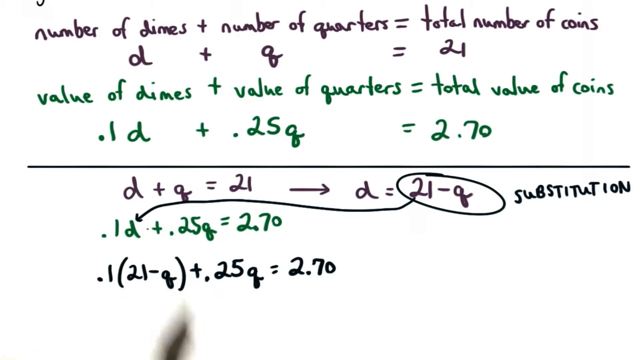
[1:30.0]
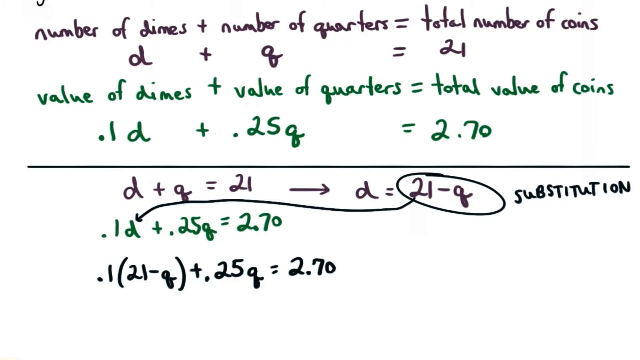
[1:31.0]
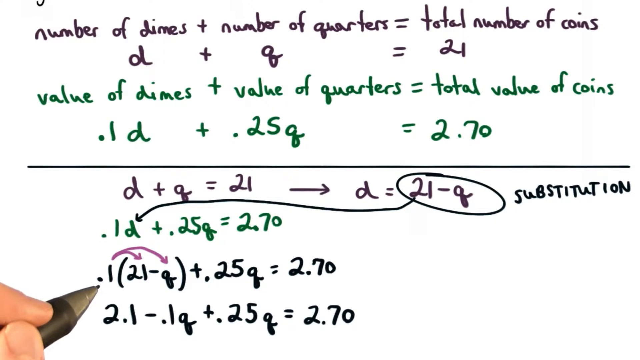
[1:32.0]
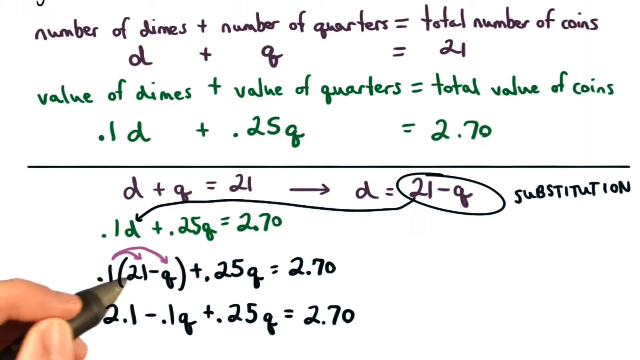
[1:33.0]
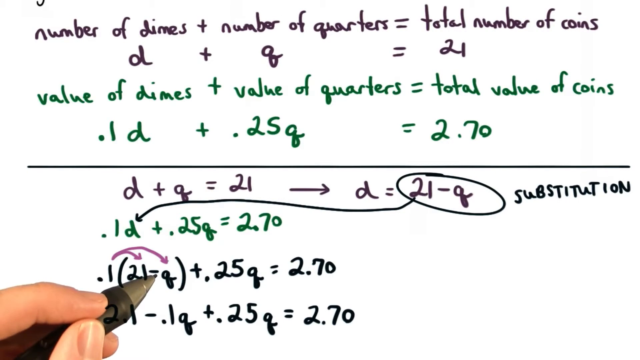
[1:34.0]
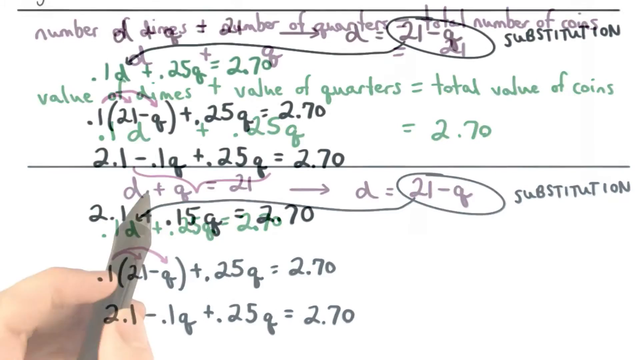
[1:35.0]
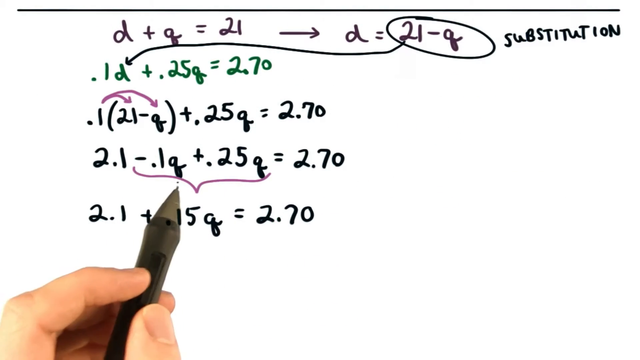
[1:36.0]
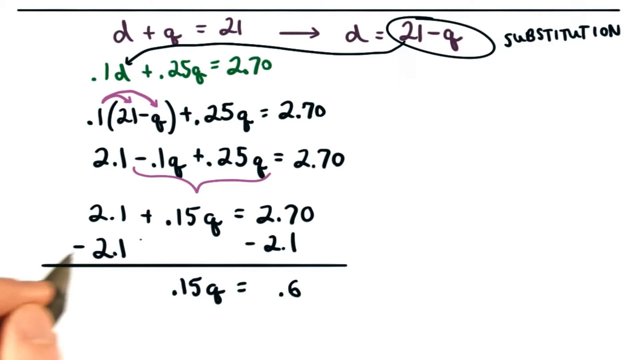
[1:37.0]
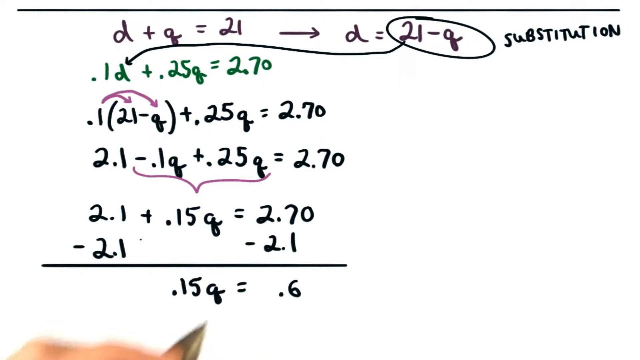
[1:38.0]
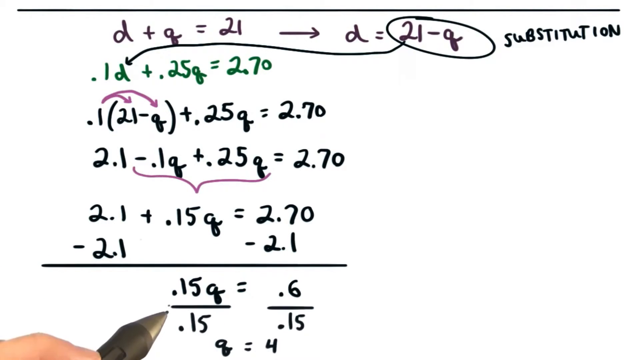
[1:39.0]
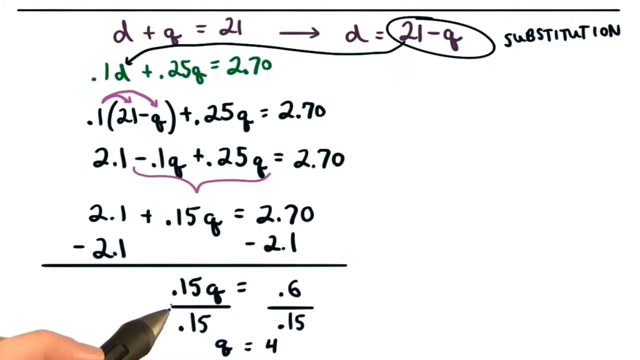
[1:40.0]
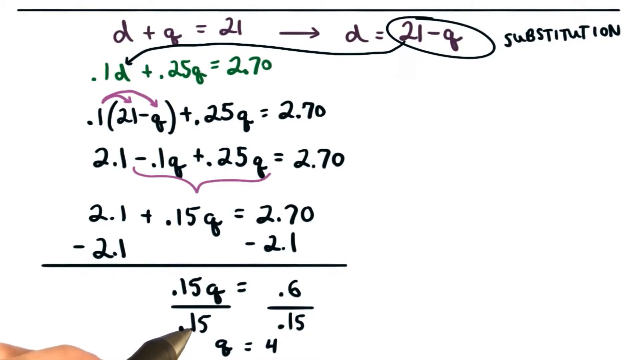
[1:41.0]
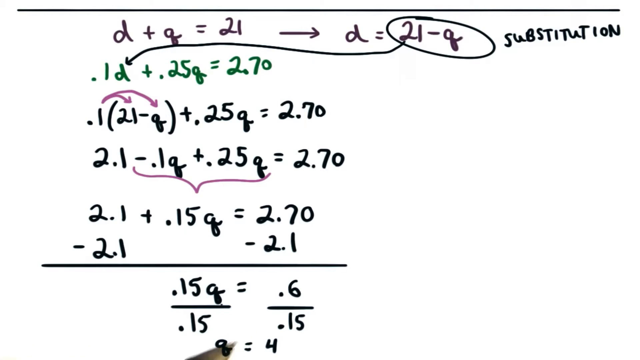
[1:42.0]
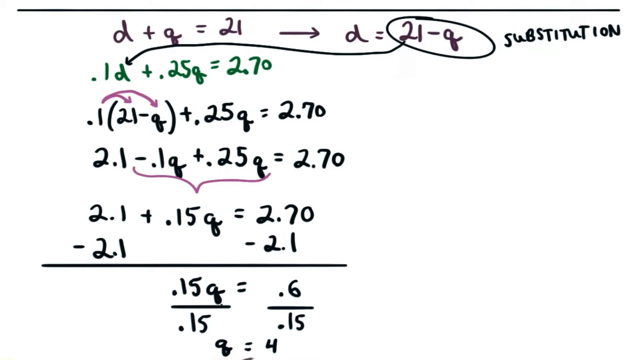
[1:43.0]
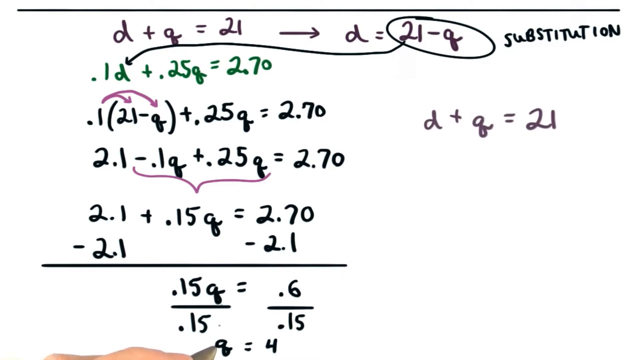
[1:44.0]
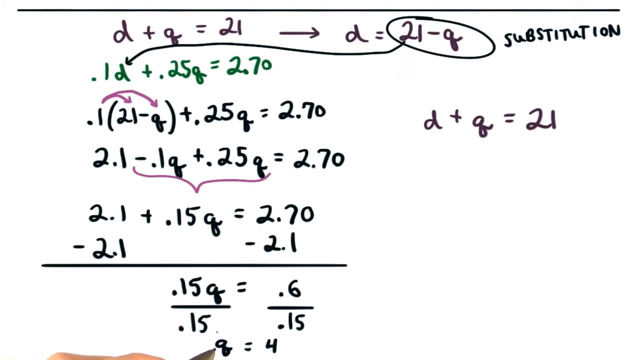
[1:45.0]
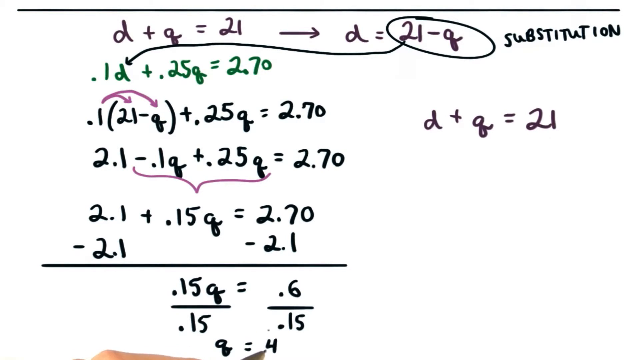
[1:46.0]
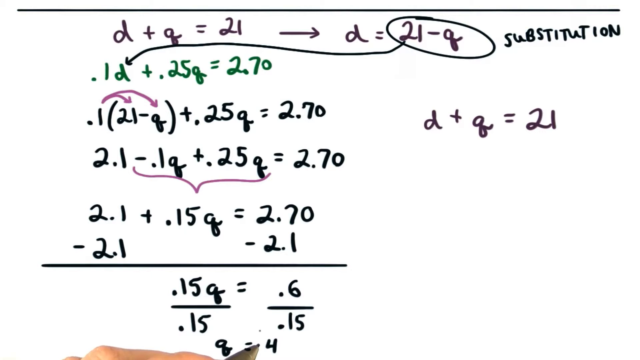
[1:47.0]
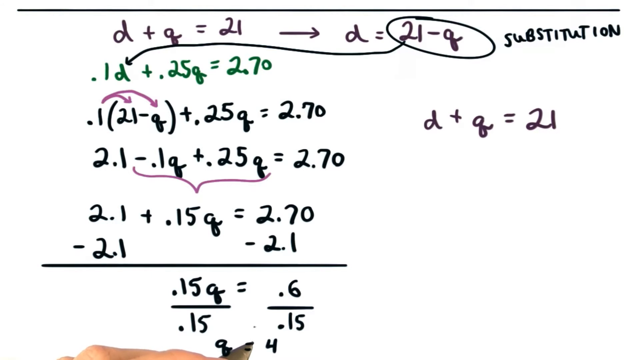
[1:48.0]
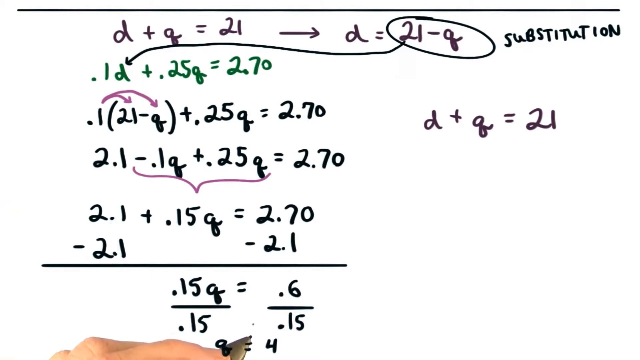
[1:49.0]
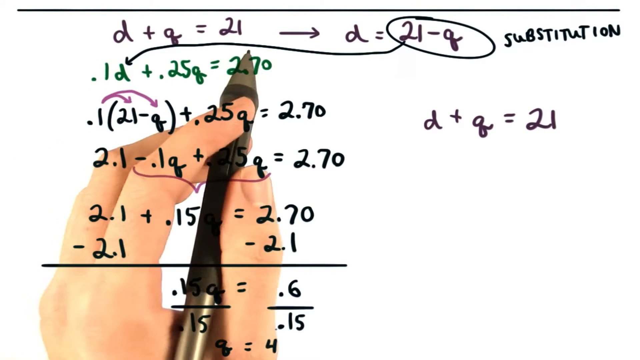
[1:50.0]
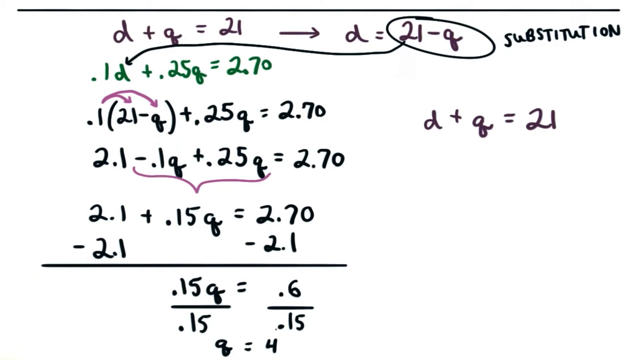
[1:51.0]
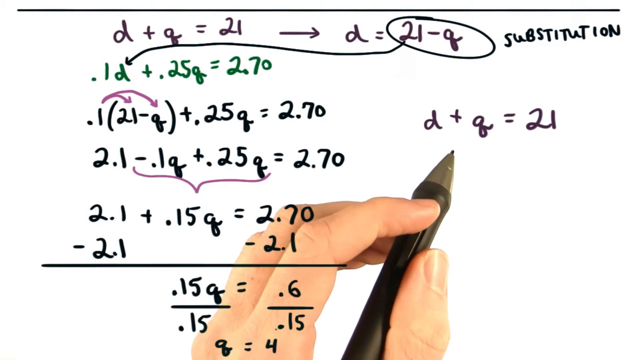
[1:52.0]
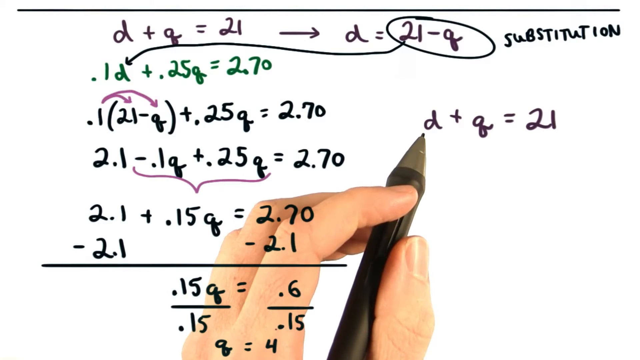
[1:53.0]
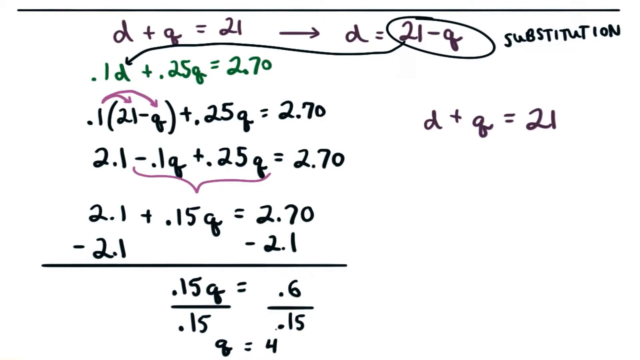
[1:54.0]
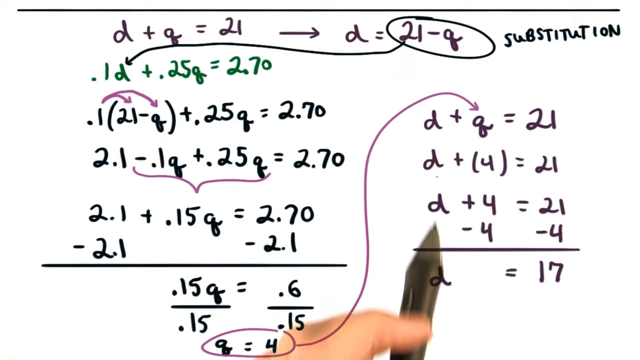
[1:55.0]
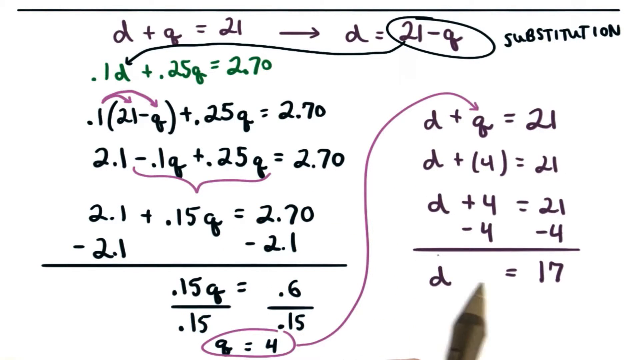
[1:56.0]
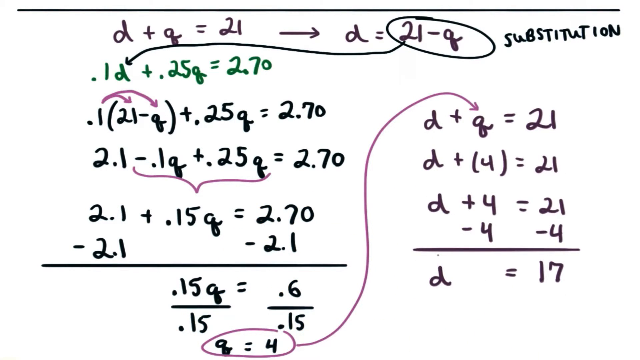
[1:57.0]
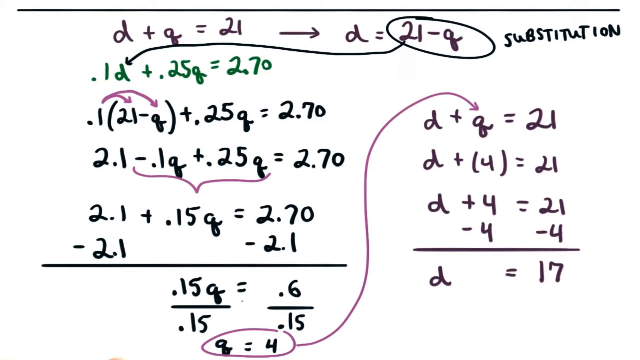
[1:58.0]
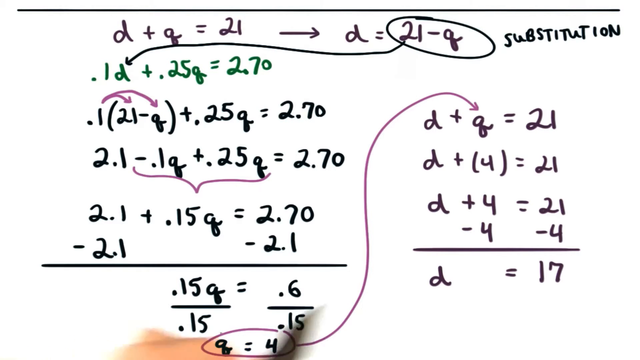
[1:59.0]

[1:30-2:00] The screen is white with a gradient to black at the bottom. Across the top are the original statements: in black, "number of dimes + number of quarters = total number of coins" and "d + q = 21" on the next line; in green, "value of dimes + value of quarters = total value of coins" and beneath it "0.1d + 0.25q = 2.70". A black horizontal line runs across the middle of the screen. Beneath it is "d + q = 21" with an arrow pointing right to another equation, "d = 21 - q", where "21 - q" is circled and the word "SUBSTITUTION" is written in capitals beside it. An arrow trails from the circle near the 2 down to the next line, which in green says "0.1d + 0.25q = 2.70". Beneath that in black is "0.1(21 - q) + 0.25q = 2.70". The pen is not visible at first; then it comes in at the bottom left corner, with just the forefinger and thumb visible, at the 0.1 next to the 21 - q. Two purple lines are drawn from the 0.1 to the 21 and to the q, indicating it will be factored in. The pen moves to the 21, then to the q. The screen shifts: the top two equations scroll off, leaving the section with "d + q = 21" and the work below it. The next line is "2.1 - 0.1q + 0.25q = 2.70", with a curly bracket beneath both q terms, and the next line combines them into "2.1 + 0.15q = 2.70". The next line has -2.1 on both sides, then a horizontal line, and "0.15q = 0.6". The pen moves to the bottom of the screen and off, comes back in, and "divide by 0.15" on both sides of that equation is written at the very bottom of the screen. The pen points at the 0.15 and moves down off the screen. On the right side of the screen, "d + q = 21" fades in. The pen fades in behind the projection, so the hand is visible underneath with the numbers above it, and points at "d + q = 21". A purple line is drawn from the bottom of the screen up to this equation to connect them, with the purple arrow pointing at the q. The next line is "d + (4) = 21", then "d + 4 = 21", then minus 4 on each side, giving "d = 17". The pen points at the d, then the 17, then circles the result, which is slightly off screen.